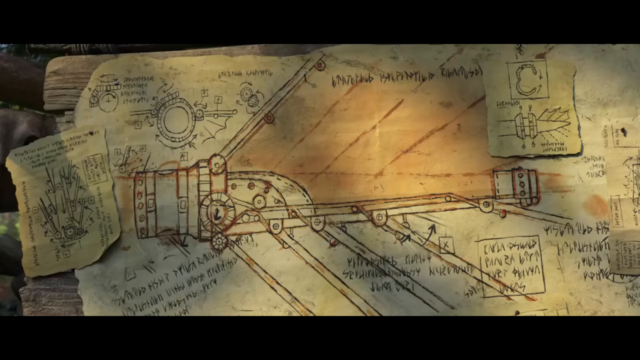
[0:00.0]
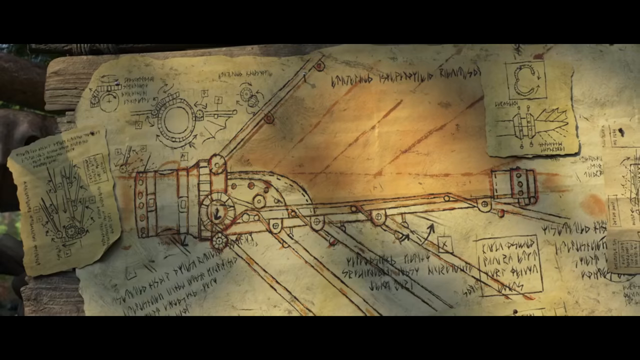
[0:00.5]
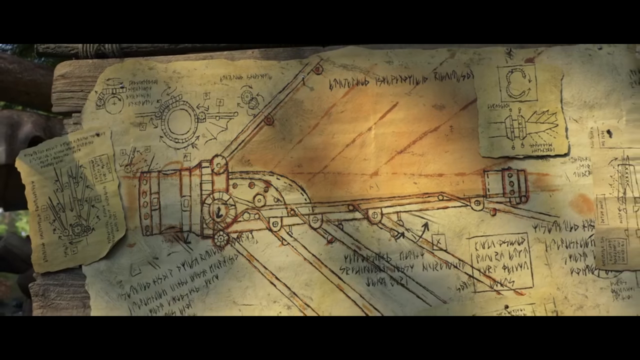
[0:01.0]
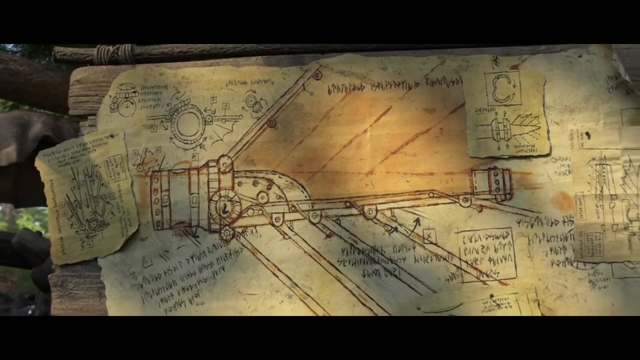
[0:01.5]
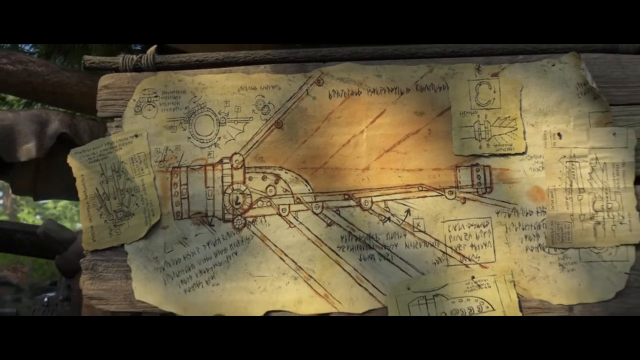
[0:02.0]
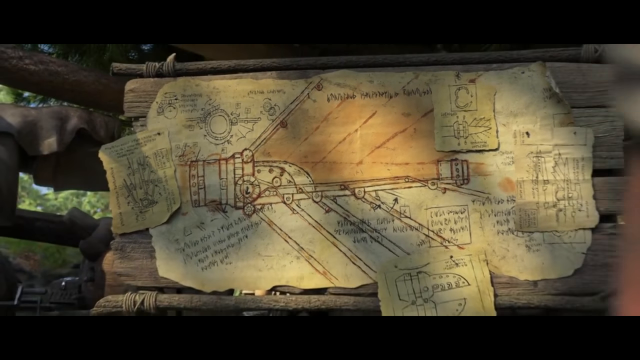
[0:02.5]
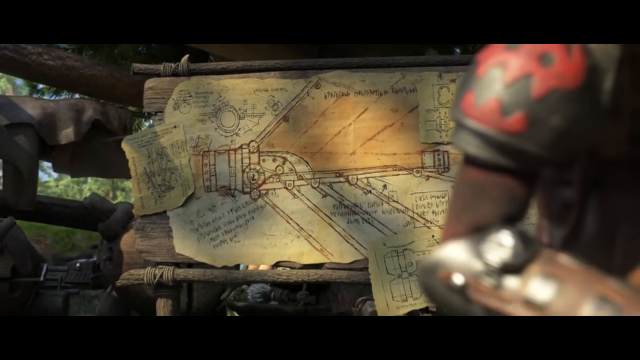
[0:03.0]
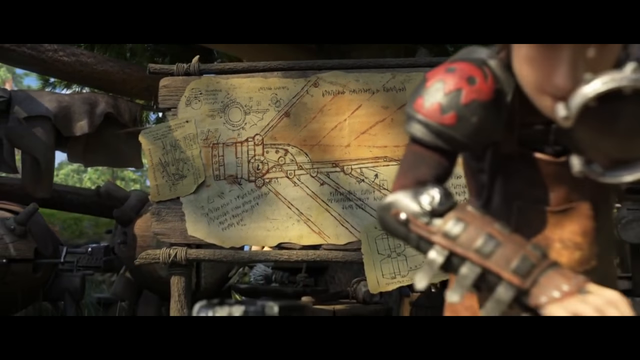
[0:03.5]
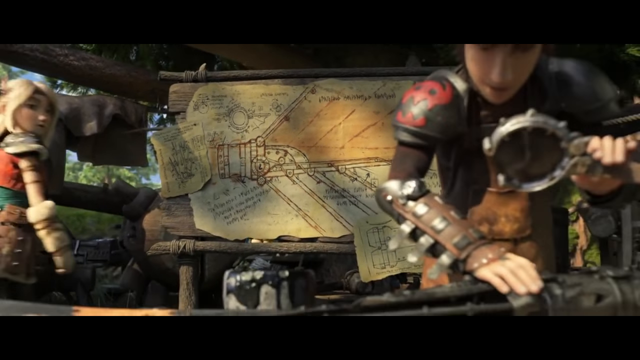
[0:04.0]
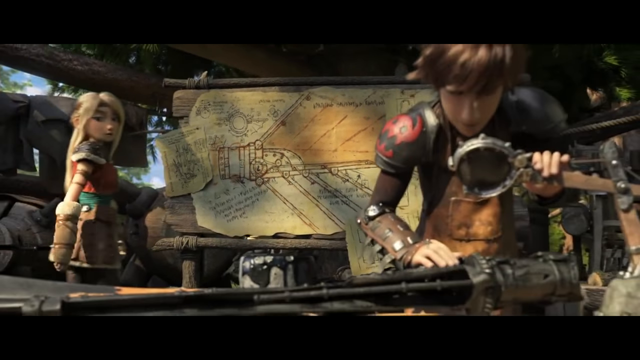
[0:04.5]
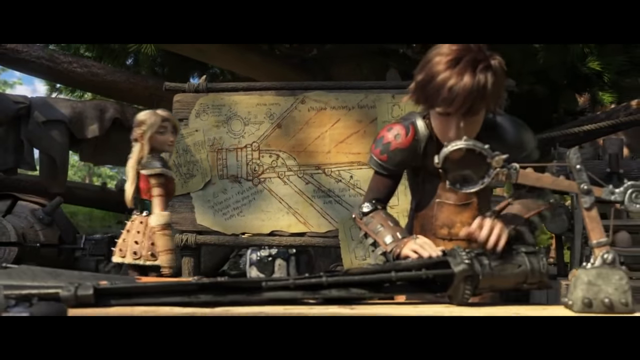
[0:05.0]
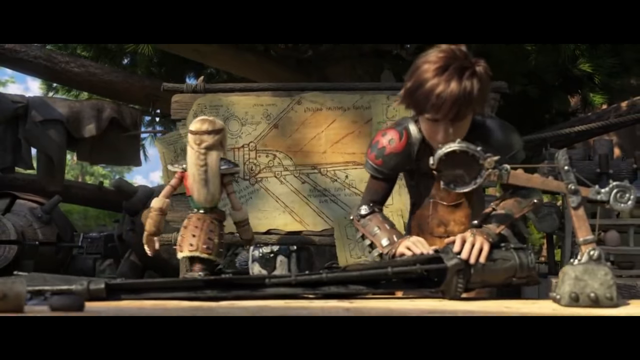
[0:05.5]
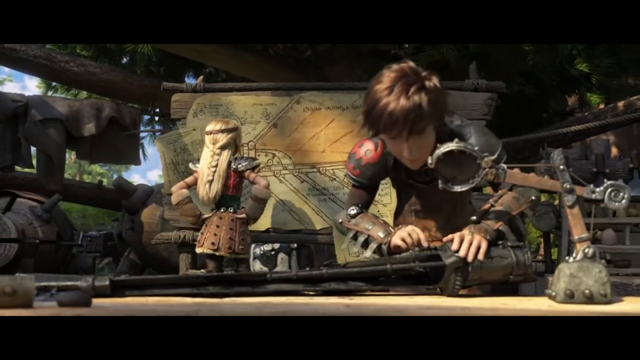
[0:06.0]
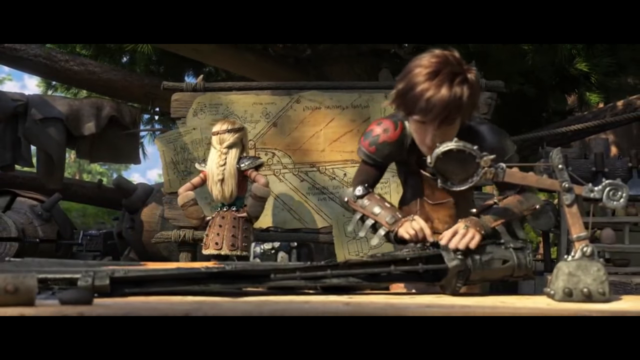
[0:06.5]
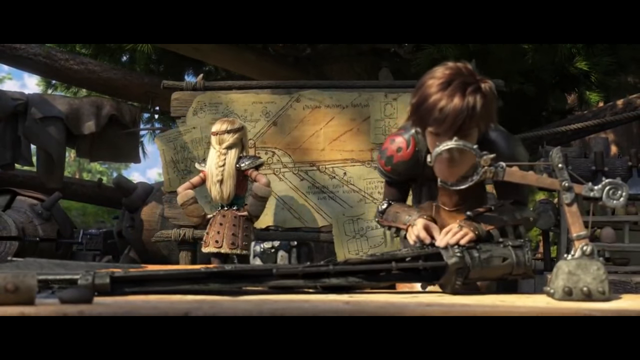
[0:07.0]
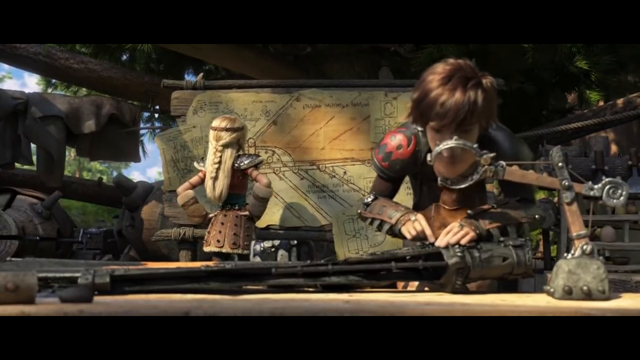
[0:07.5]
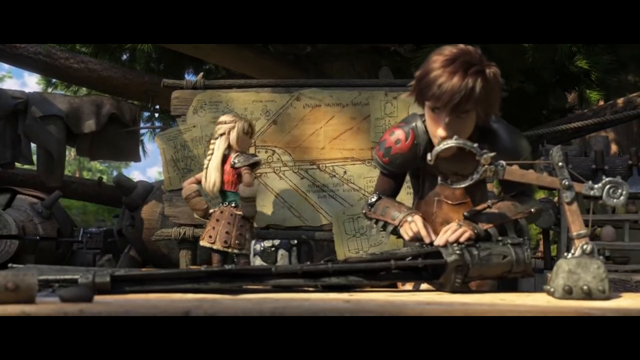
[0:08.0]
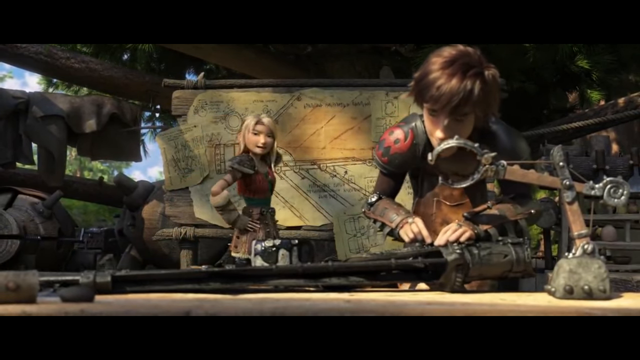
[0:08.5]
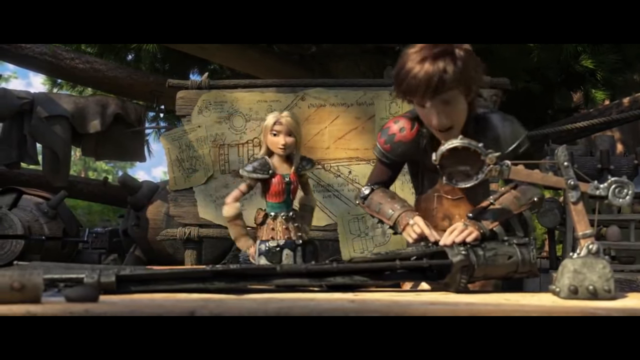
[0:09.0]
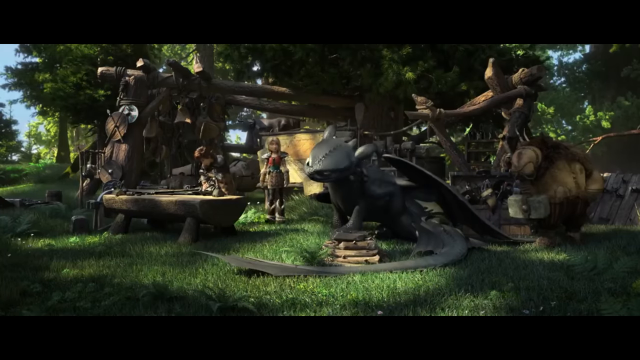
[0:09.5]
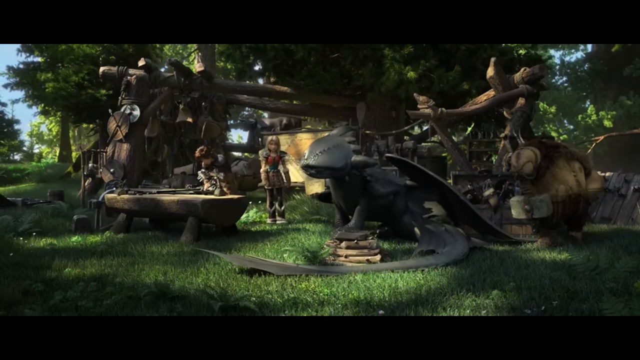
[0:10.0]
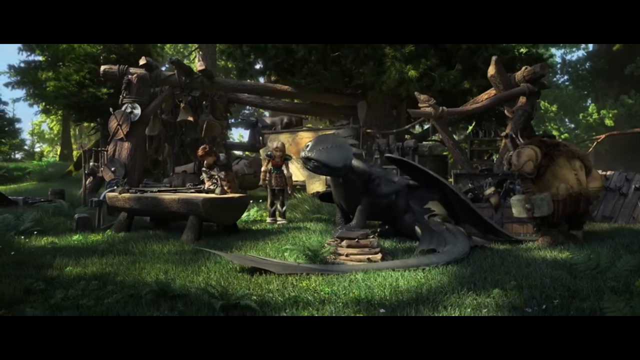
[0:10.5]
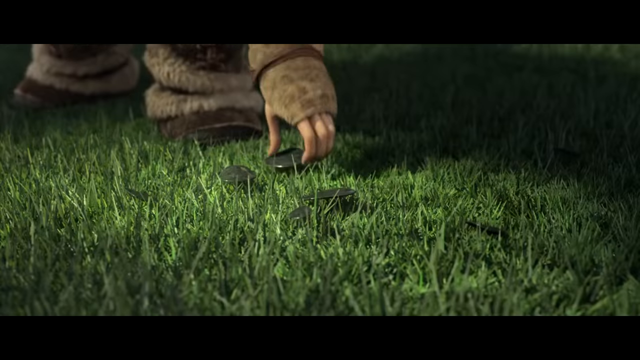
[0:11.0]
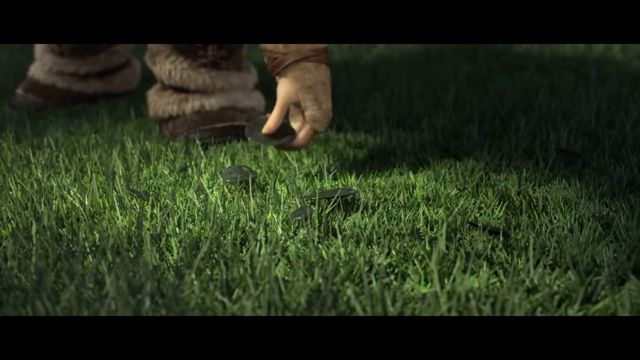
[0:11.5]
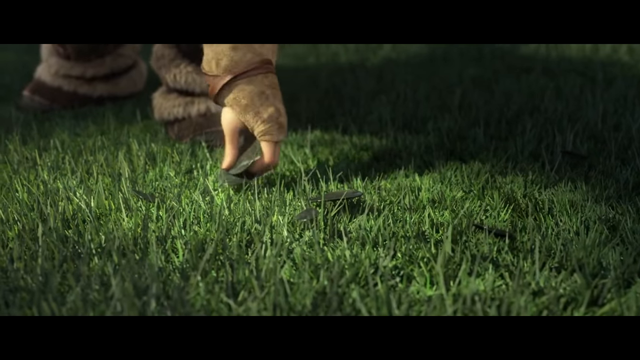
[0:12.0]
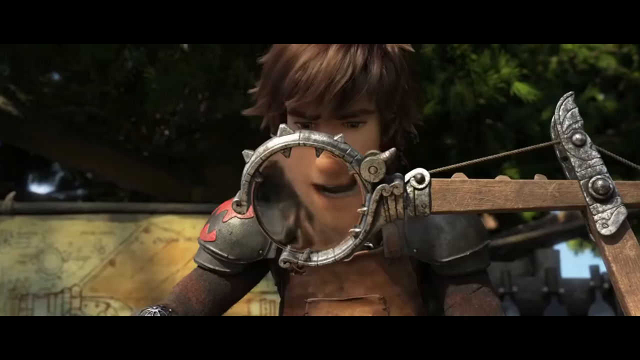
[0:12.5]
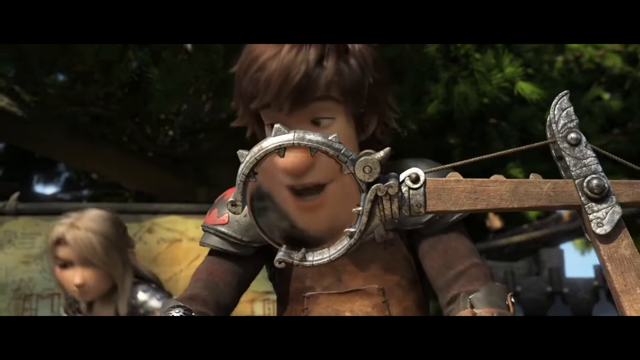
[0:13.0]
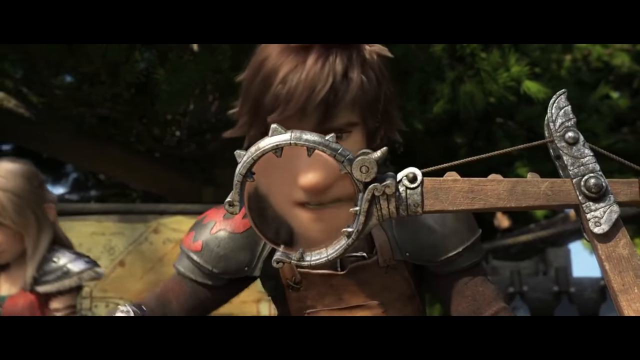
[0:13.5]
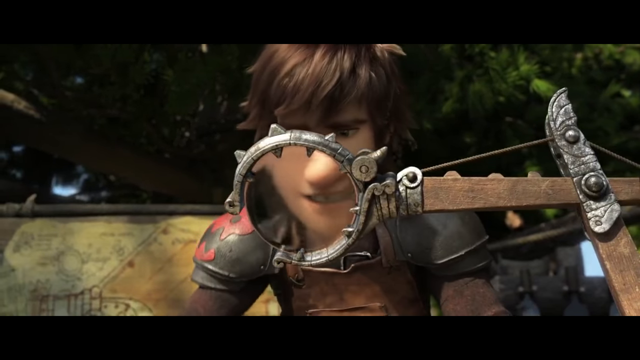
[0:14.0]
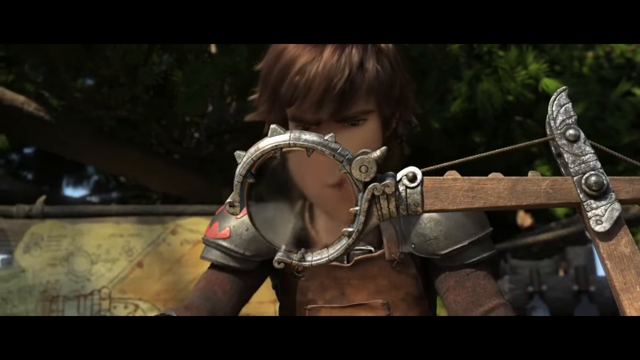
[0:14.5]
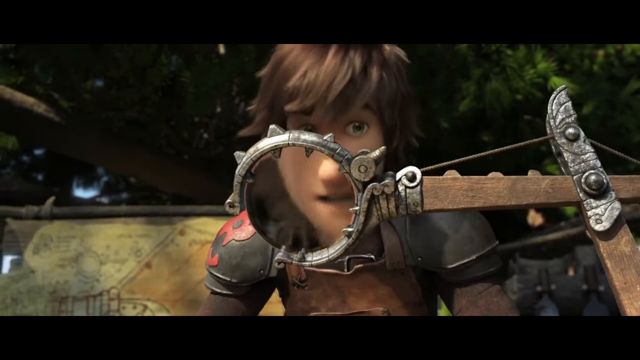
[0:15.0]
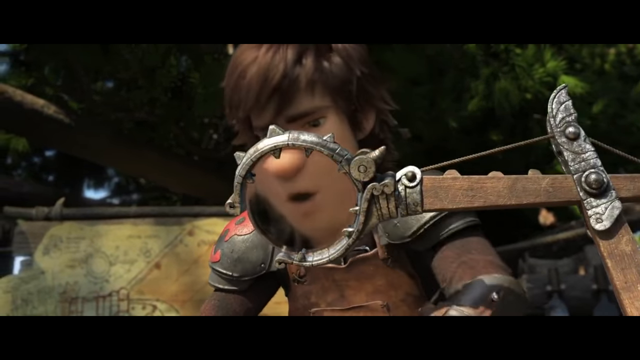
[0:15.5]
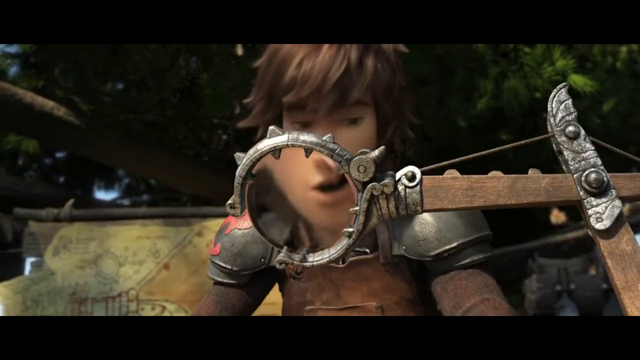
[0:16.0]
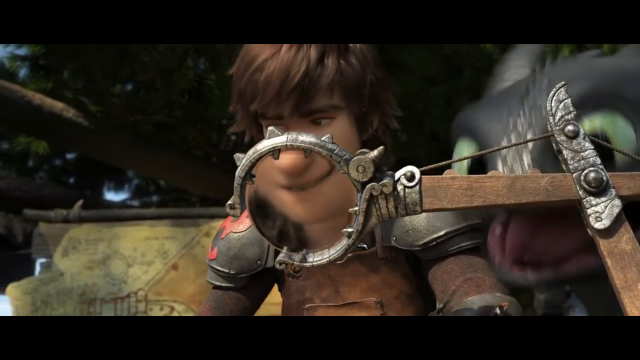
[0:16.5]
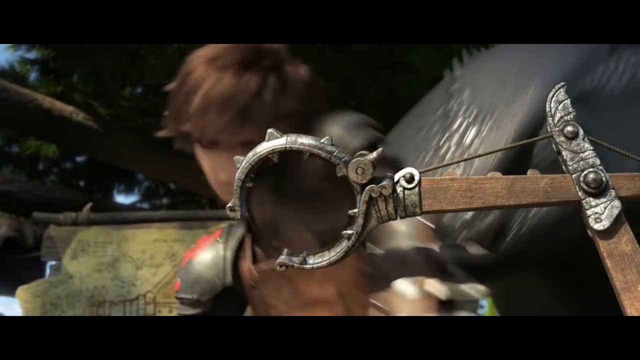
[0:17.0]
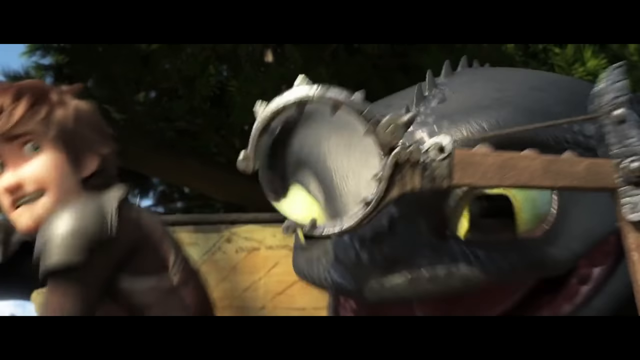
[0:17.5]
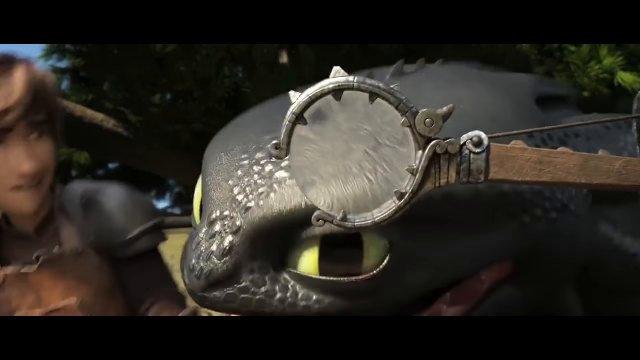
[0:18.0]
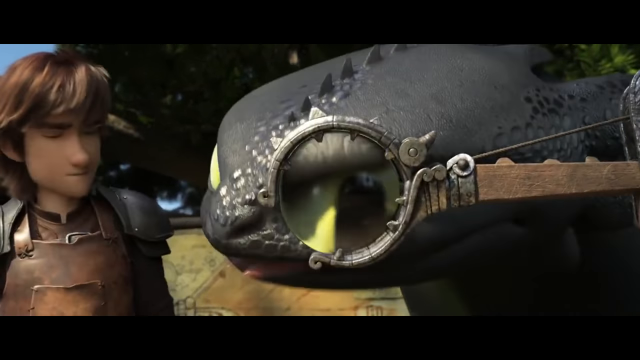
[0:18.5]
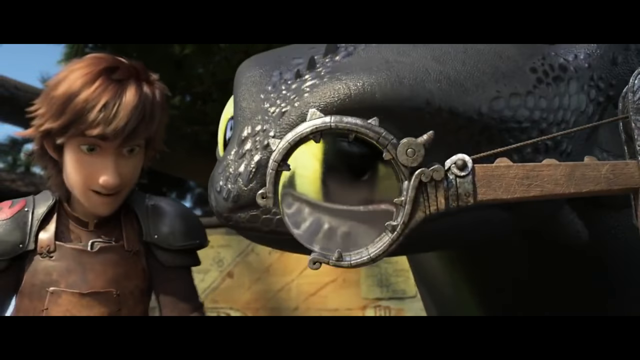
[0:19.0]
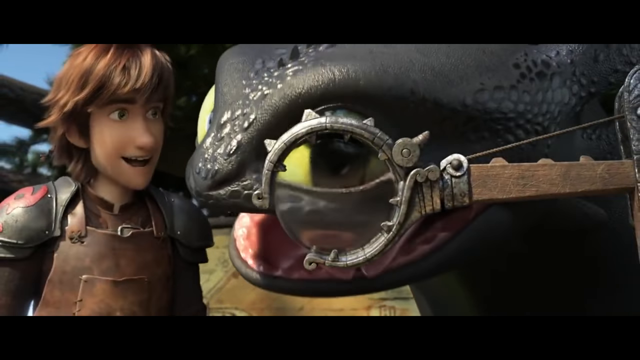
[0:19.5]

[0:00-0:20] The camera looks down on what appears to be a blueprint for some invention. It is beige, possibly old, and looks a little blurry, and the writing may not be in English. The drawing seems to show something with a light in the front. Two people are talking. One is on the right side and possibly is working on something like a kind of magnifying glass. The other character, with blonde hair, is on the left side of the frame looking at the map, which appears to be the blueprint, then turns around and starts talking to the guy.